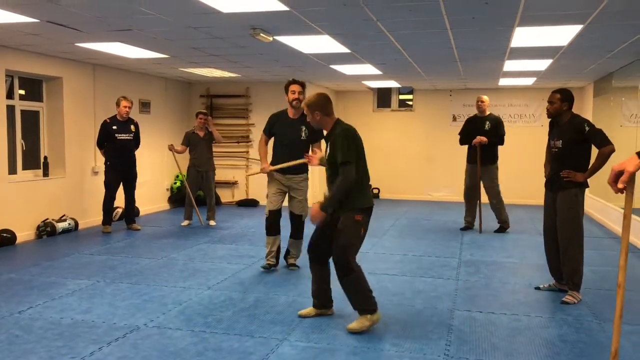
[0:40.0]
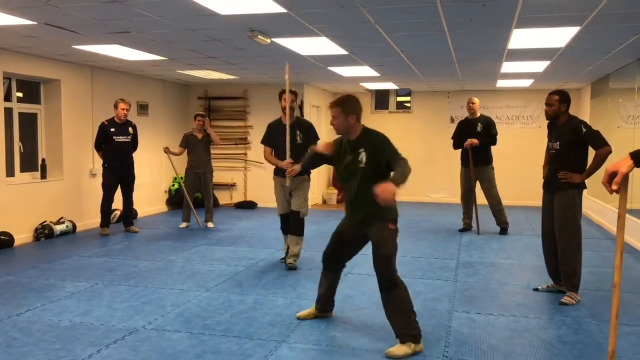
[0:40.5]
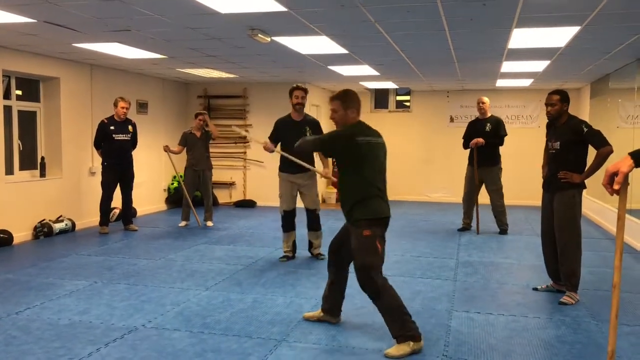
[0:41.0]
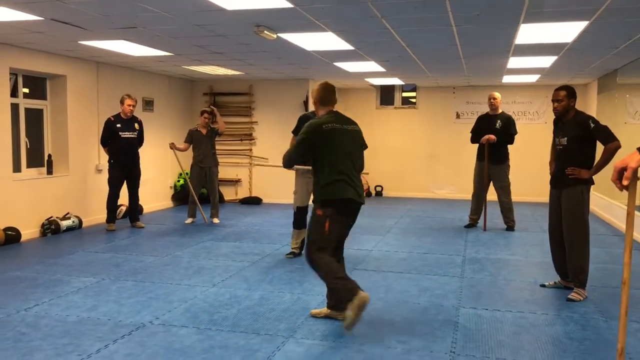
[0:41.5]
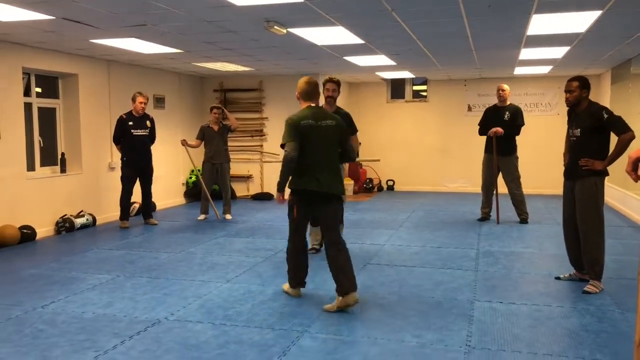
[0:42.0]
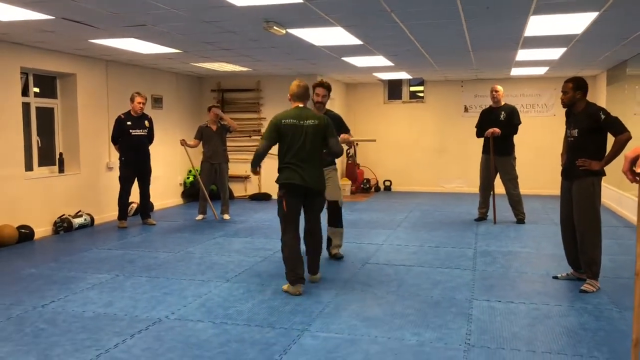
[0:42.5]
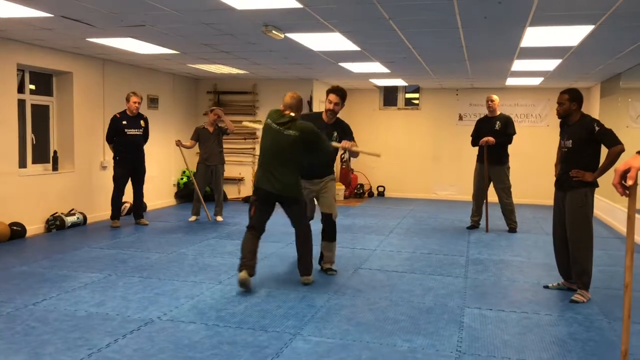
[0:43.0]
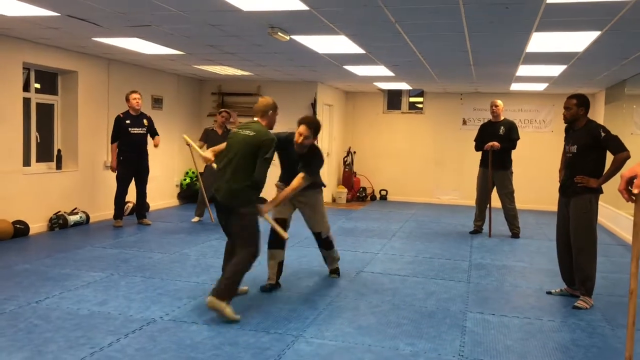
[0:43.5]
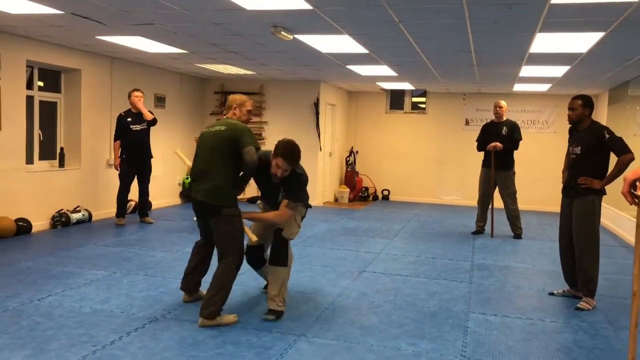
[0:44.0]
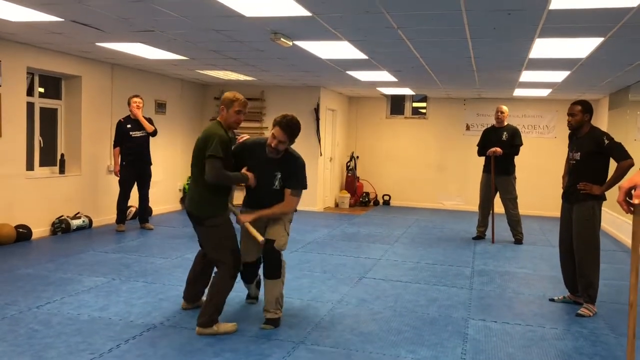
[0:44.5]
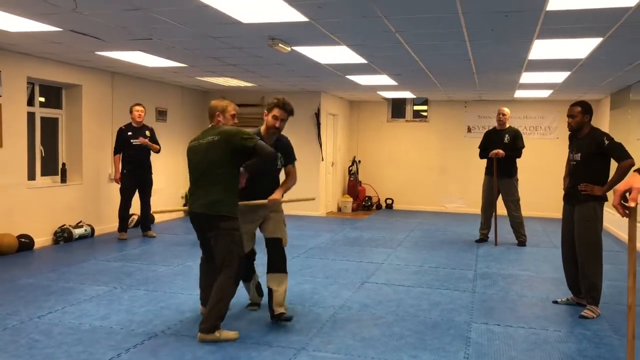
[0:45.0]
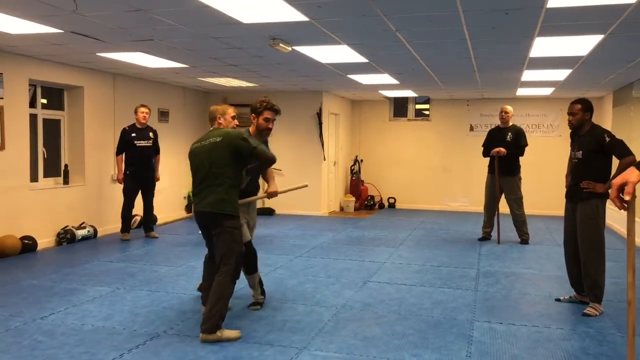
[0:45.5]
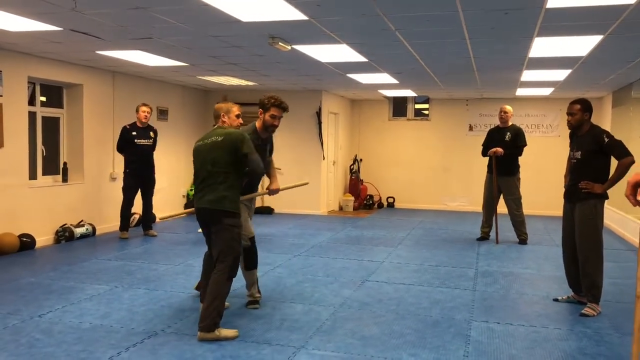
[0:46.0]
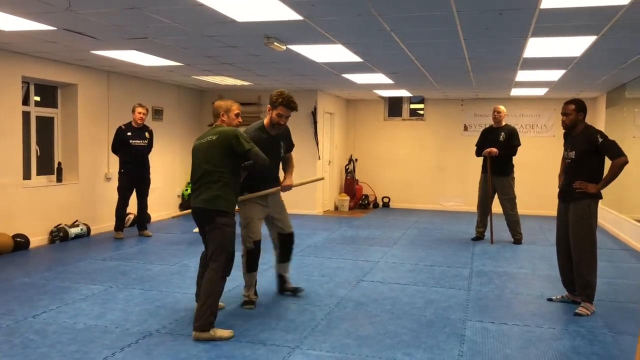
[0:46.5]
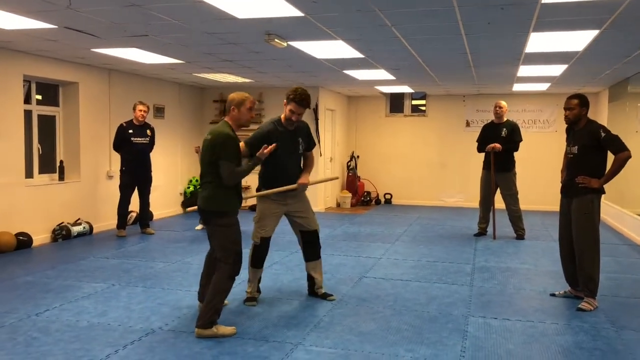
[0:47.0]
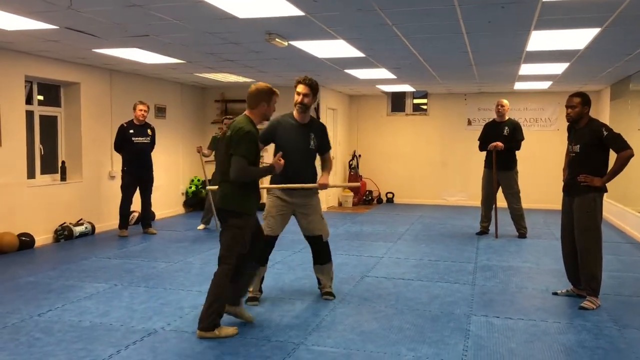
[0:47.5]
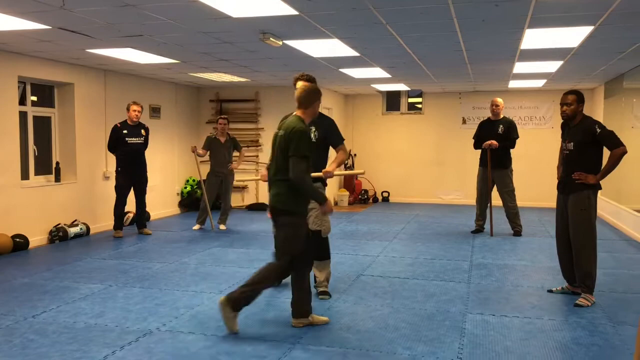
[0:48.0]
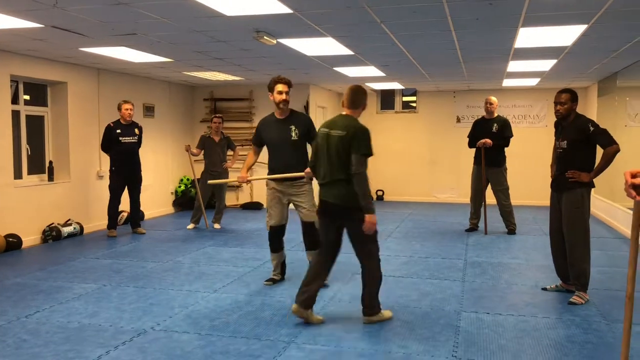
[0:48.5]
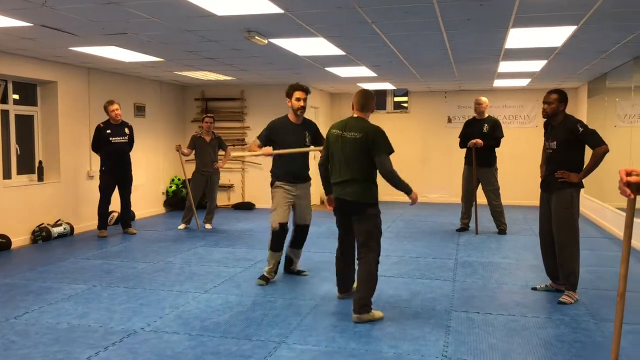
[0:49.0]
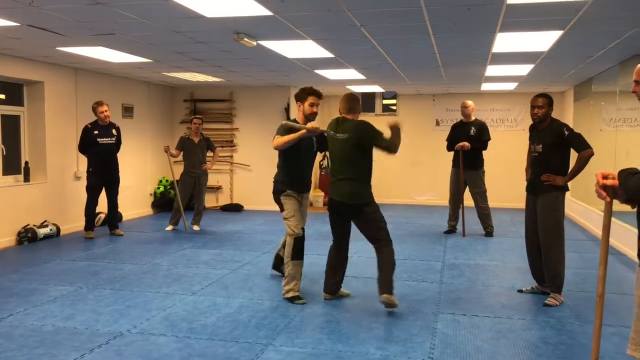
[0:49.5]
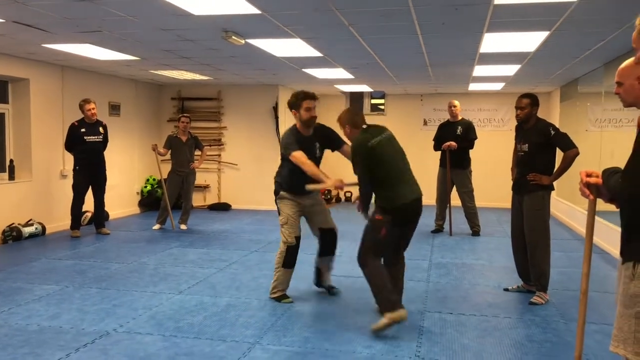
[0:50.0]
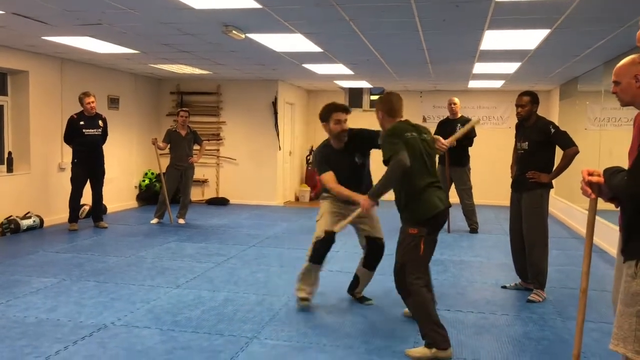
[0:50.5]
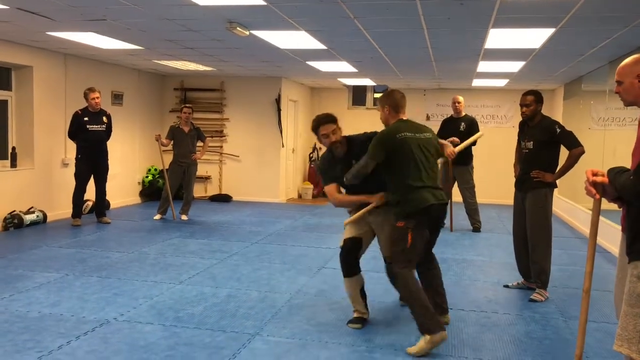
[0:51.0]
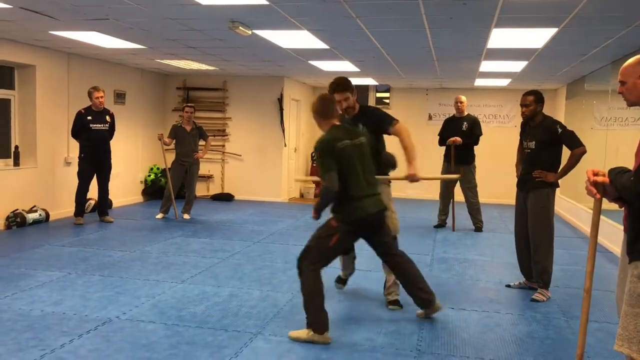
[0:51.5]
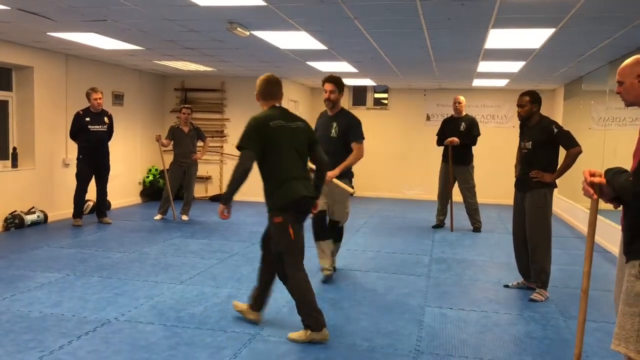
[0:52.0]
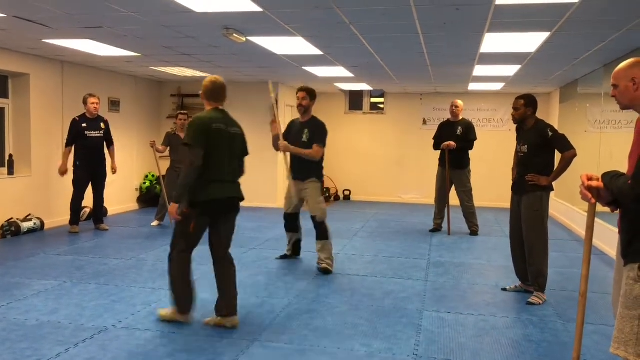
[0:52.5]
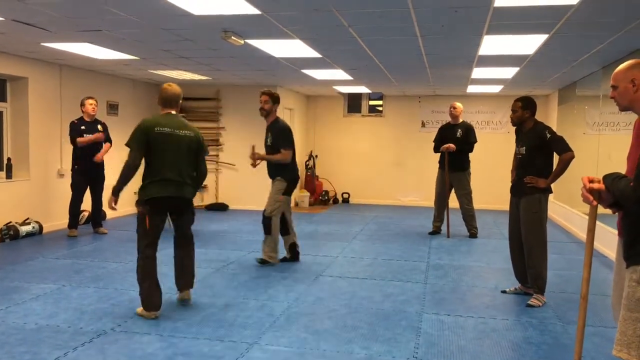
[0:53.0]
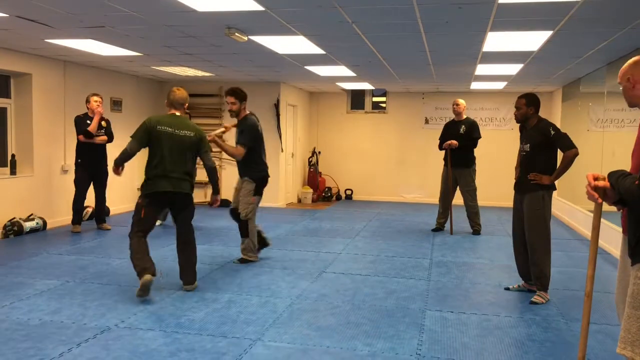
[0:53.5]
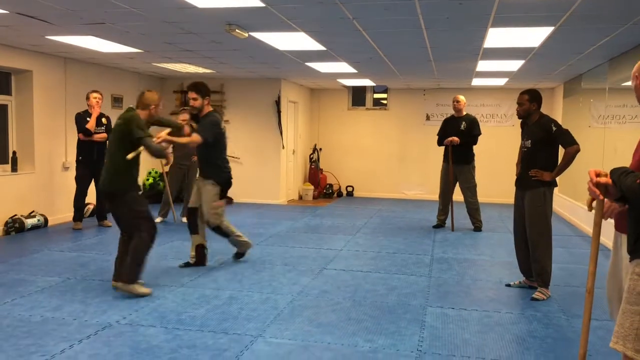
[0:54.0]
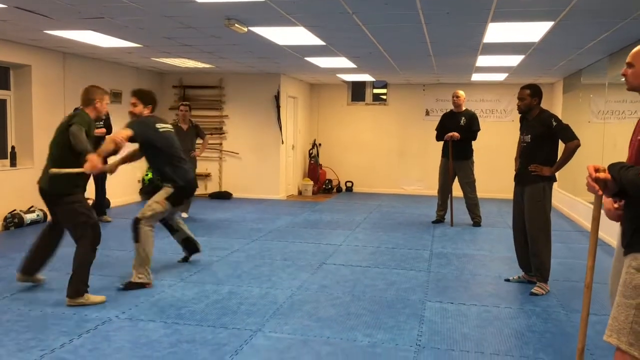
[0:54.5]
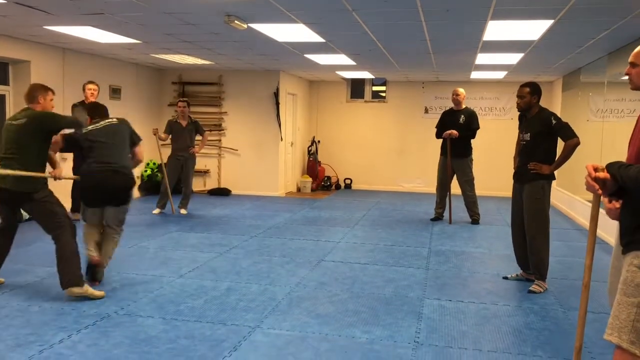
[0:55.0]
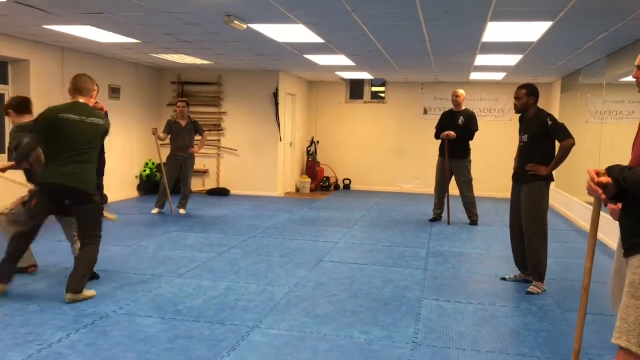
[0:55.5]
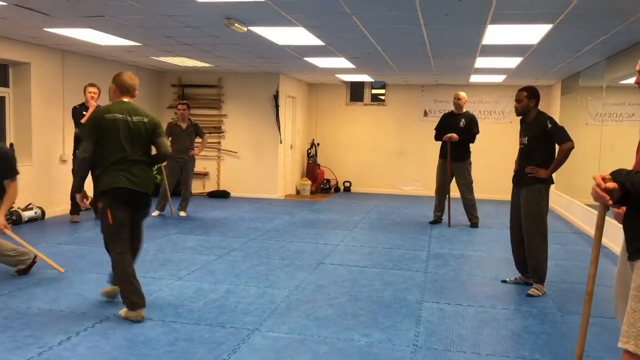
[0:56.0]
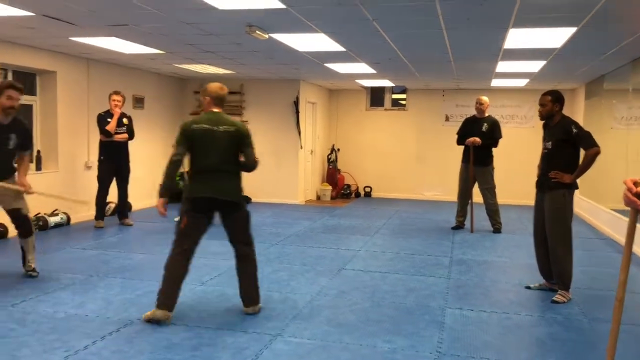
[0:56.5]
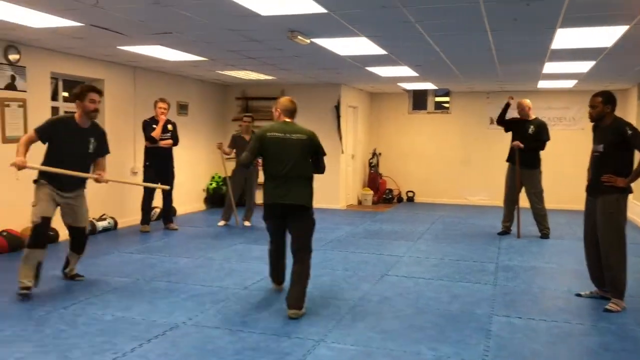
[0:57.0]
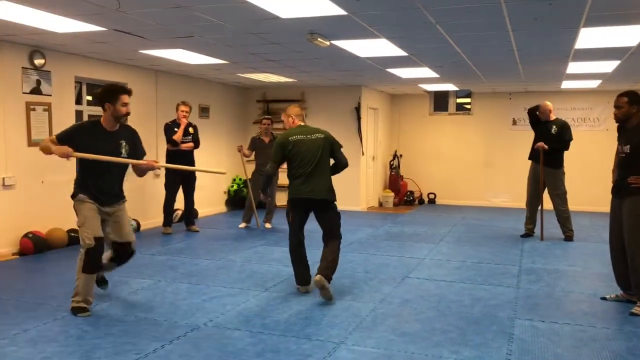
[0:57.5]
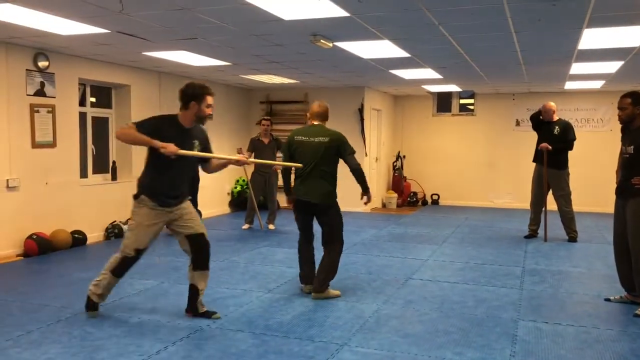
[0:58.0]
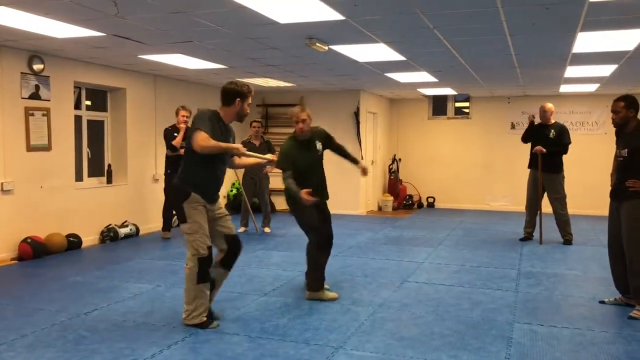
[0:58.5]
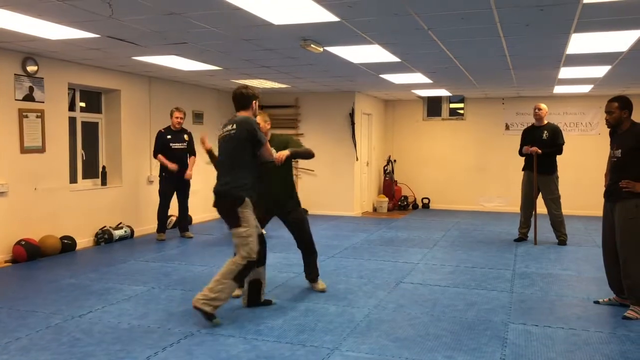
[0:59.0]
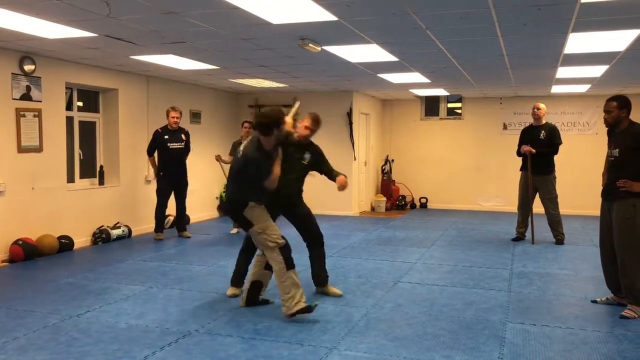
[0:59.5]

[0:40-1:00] The instructor stands facing the camera, then moves to throw an elbow on his left side. He turns to face away from the camera, toward the student, who stands with a stick in his hand, holds it out in front of him and pushes it toward the instructor. The instructor grabs the stick and pulls the student downward along with the pole. As the student tries to back up, the instructor seems to move his elbow forward and down a couple of times to show the students that movement. He then says something to the students, gesturing with his right hand as if making a point. He lets go of the pole, the student stands up straight, and the instructor walks to the right side of the frame. The student raises the pole horizontally and moves toward the instructor, shoving it toward the instructor's left shoulder, and the instructor swipes down, pushing the brown pole down with his right hand.